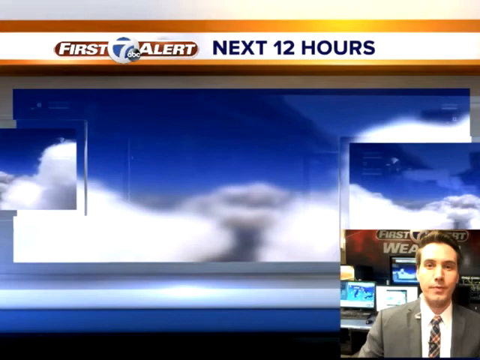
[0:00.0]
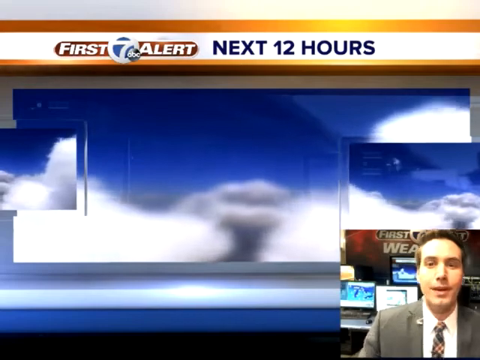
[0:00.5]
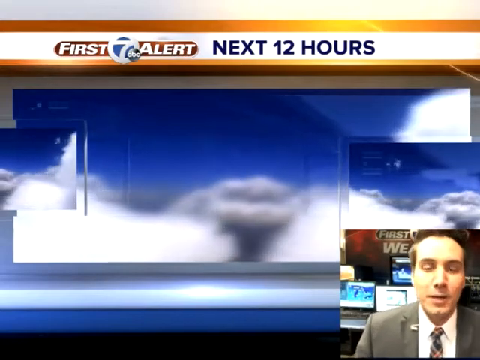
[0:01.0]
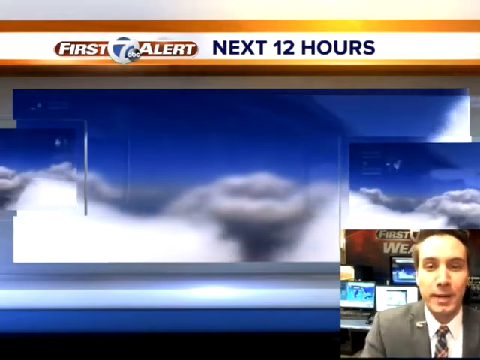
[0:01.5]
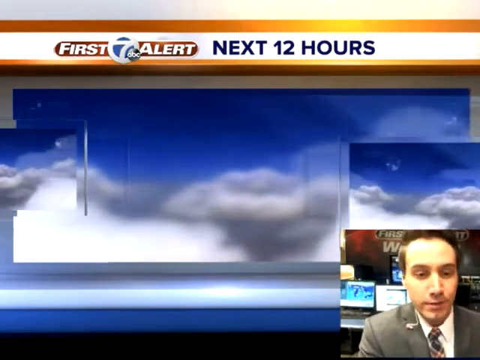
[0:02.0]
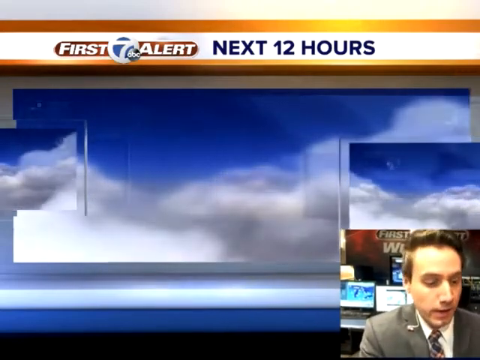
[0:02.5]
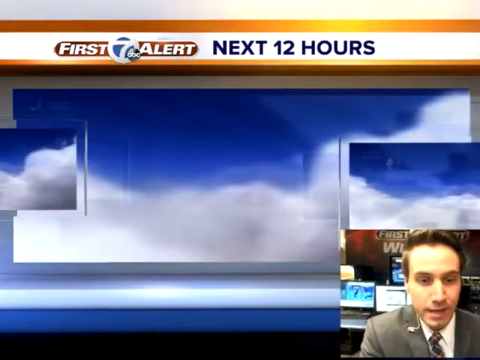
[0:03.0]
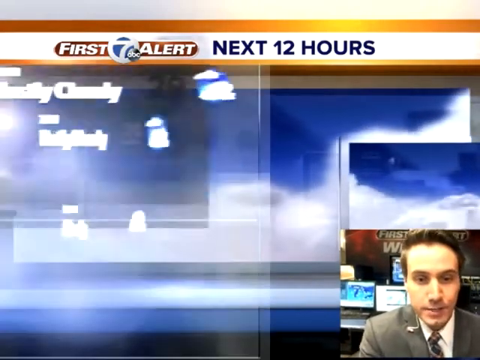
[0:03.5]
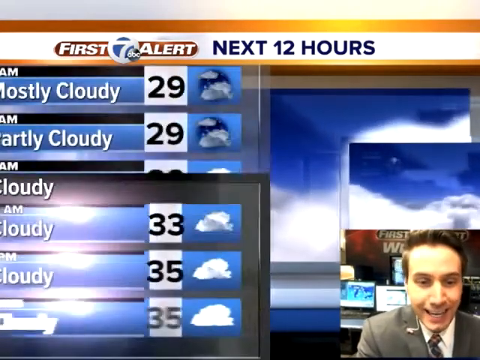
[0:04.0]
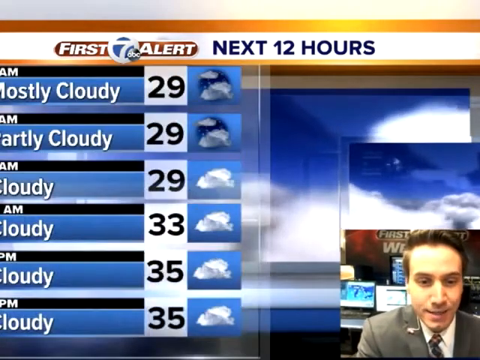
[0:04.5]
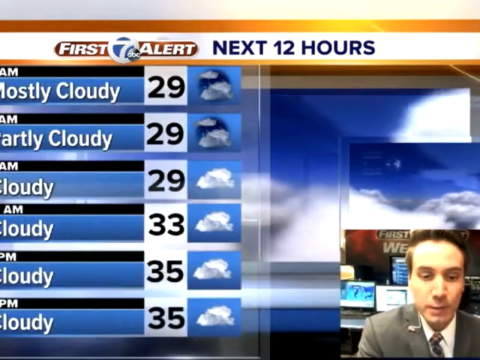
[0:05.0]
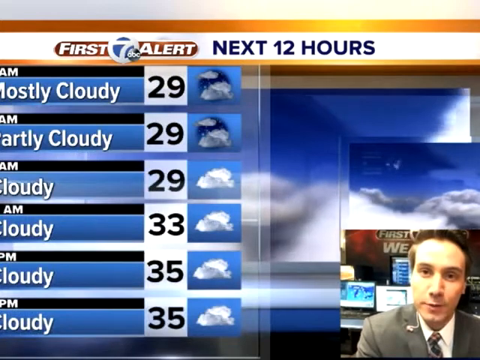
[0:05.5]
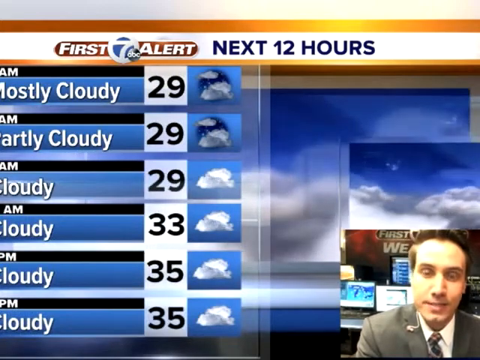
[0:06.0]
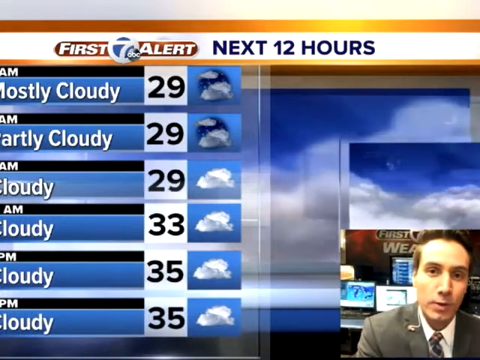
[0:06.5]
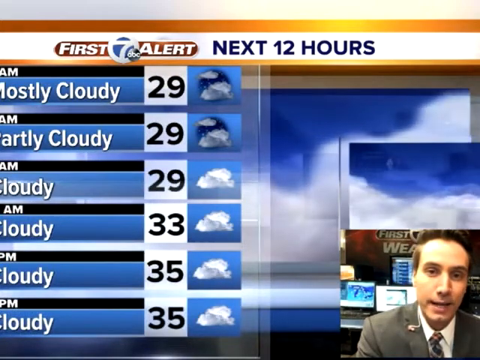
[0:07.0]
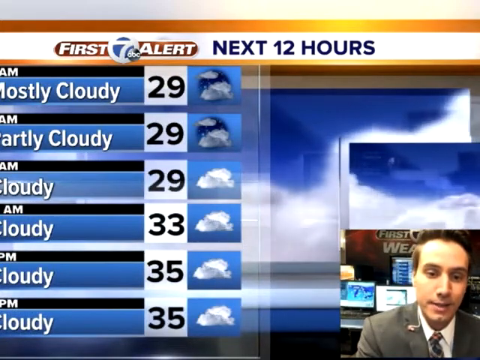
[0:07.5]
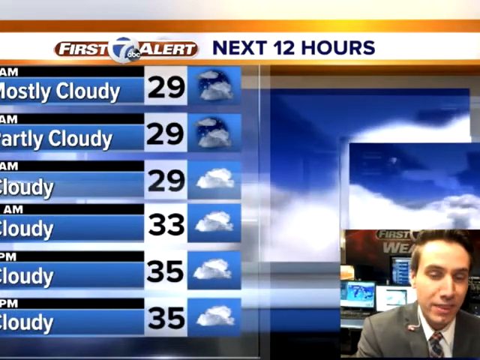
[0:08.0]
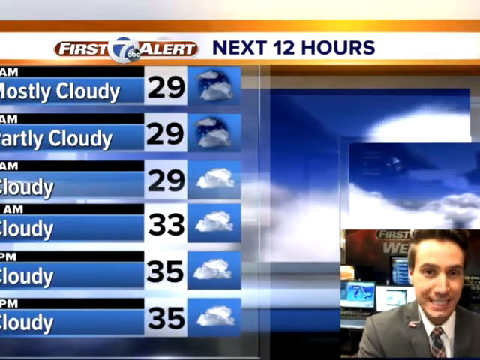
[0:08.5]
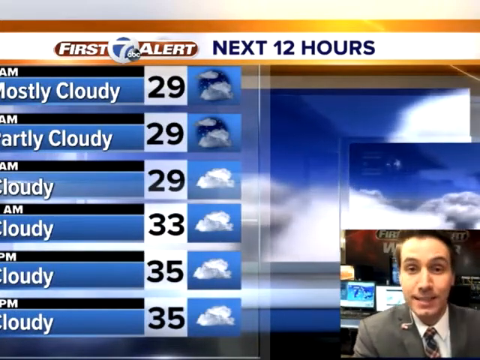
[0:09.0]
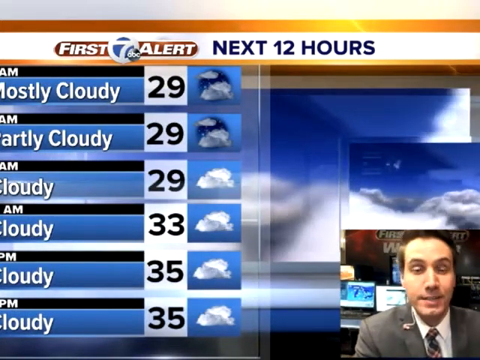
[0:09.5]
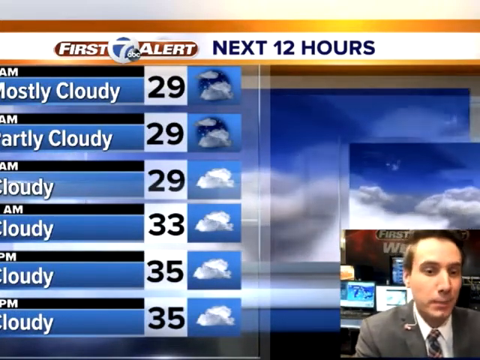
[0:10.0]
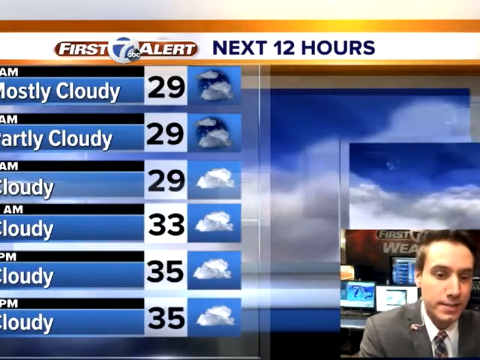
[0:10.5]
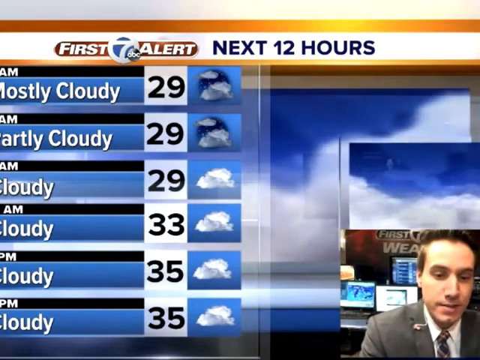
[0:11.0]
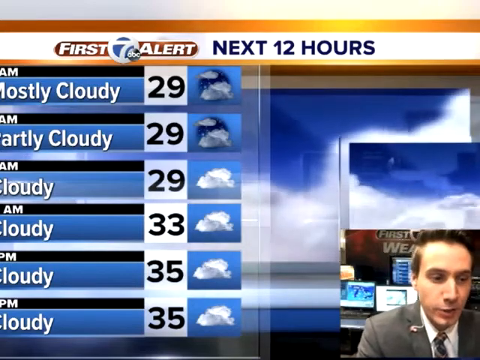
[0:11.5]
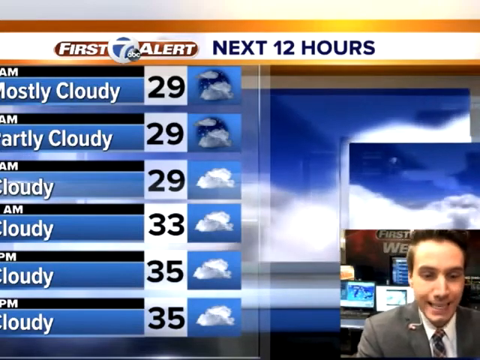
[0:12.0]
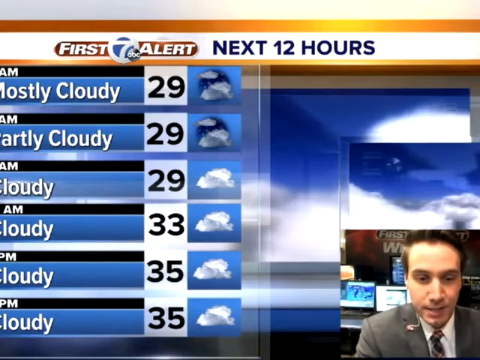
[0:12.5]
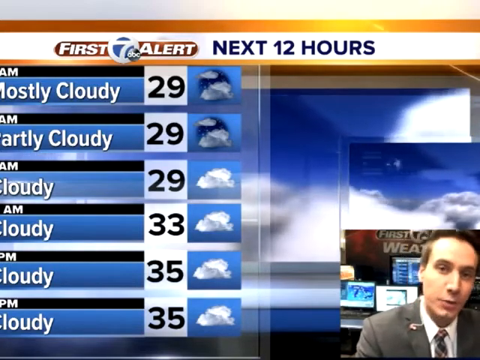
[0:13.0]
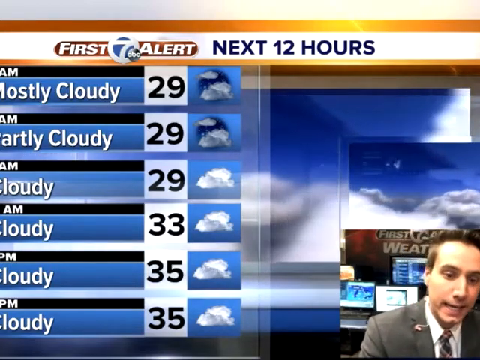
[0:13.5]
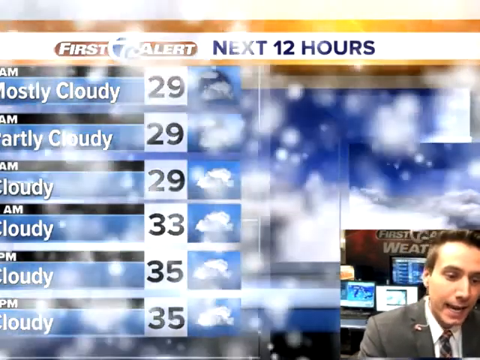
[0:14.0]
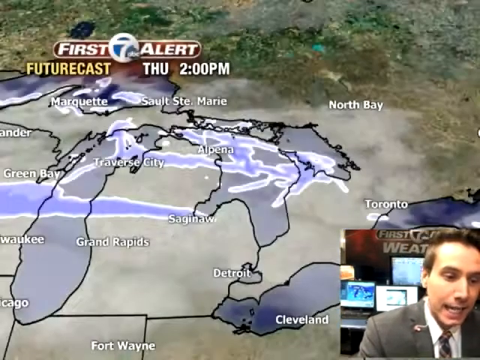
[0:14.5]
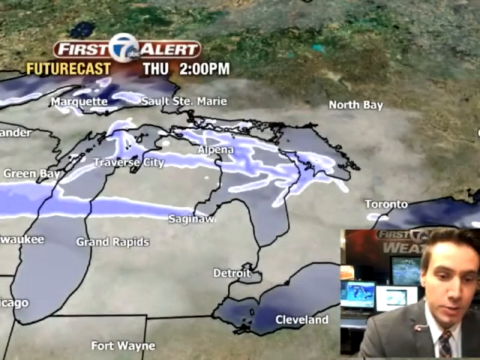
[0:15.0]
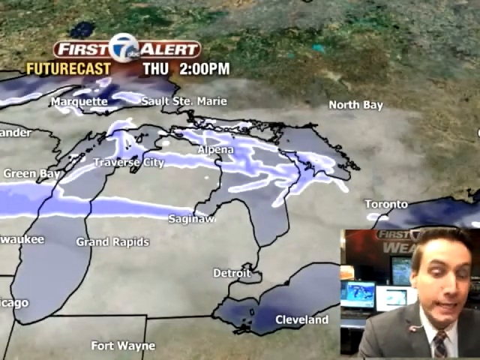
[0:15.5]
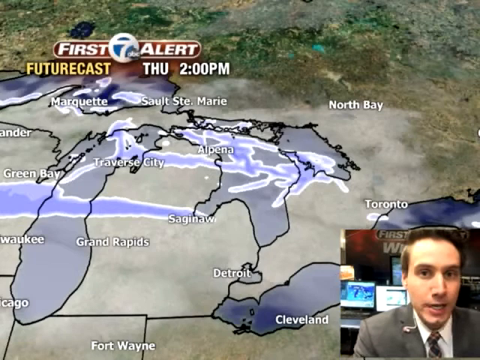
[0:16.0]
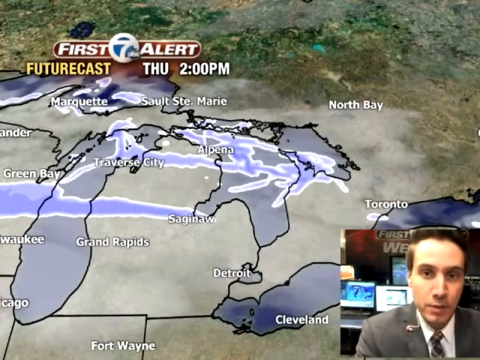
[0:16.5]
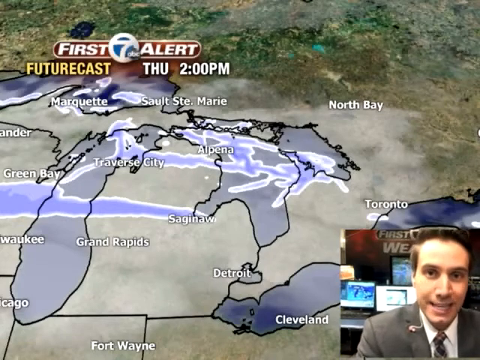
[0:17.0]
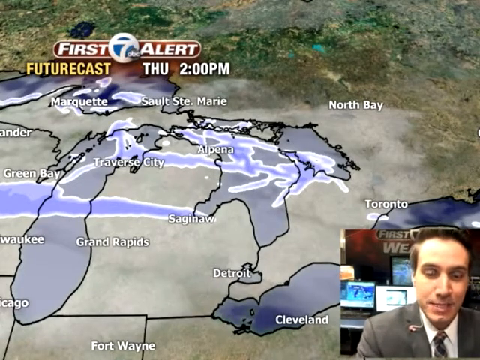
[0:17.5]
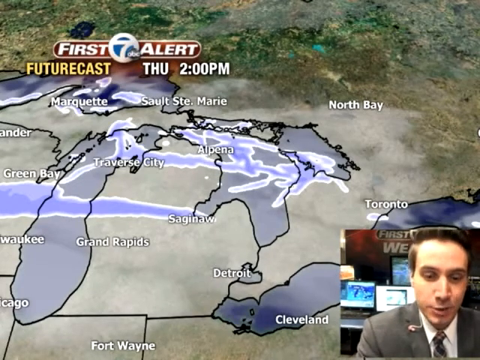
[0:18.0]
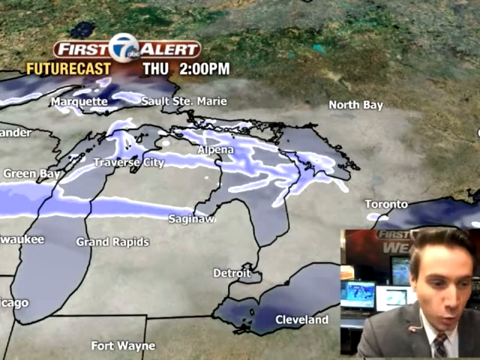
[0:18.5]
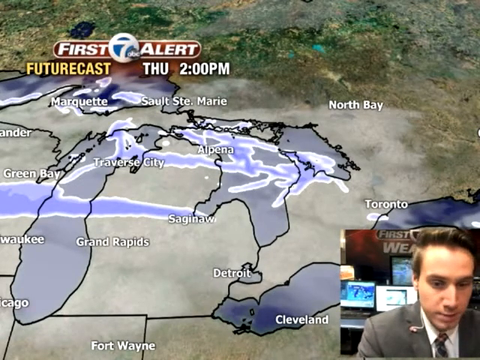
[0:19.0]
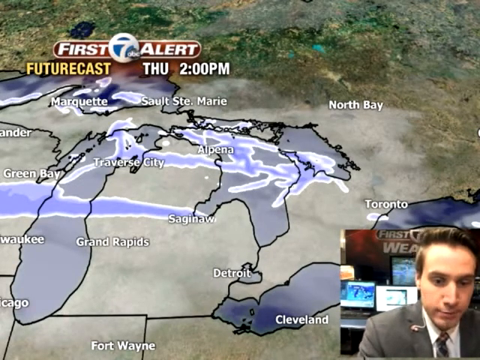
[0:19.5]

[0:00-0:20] A weather alert warns of a storm that is coming, and a forecast is shown: mostly cloudy, with temperatures between 9 Fahrenheit and 85 Fahrenheit. A man is in an office, wearing a suit with a long shirt, with a bunch of computers behind him. He shows a map, apparently of a state. Places on the map include Peru, Guatemala and Sierra Leone, along with other states that are possibly in America. The name of the weather station is shown as 1st September, part of ABC News.